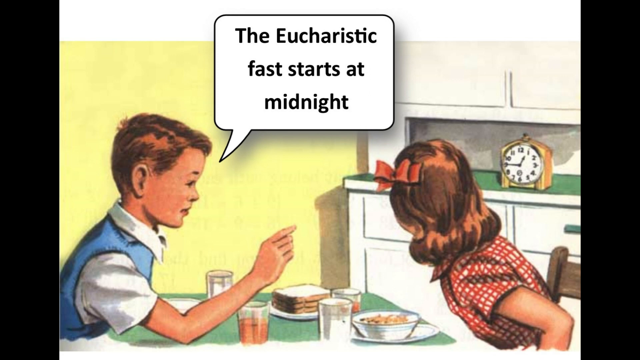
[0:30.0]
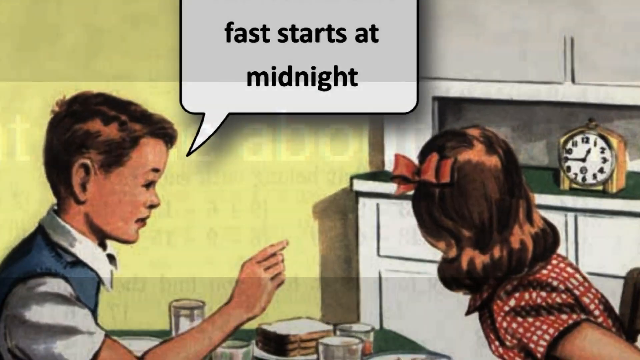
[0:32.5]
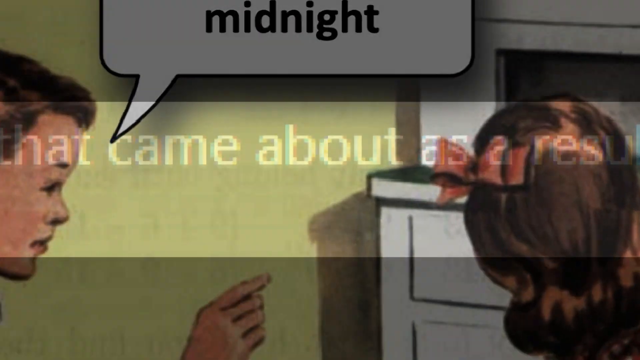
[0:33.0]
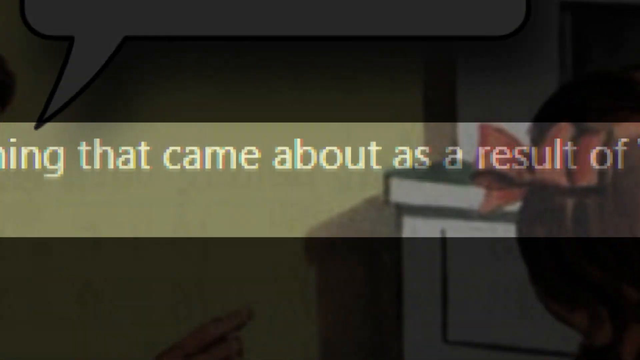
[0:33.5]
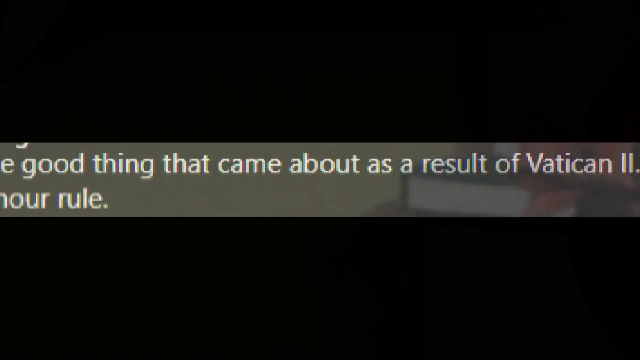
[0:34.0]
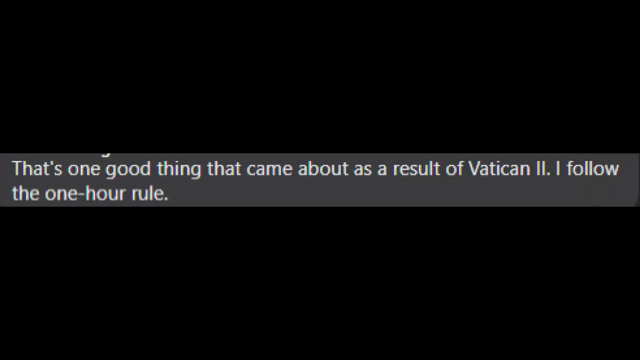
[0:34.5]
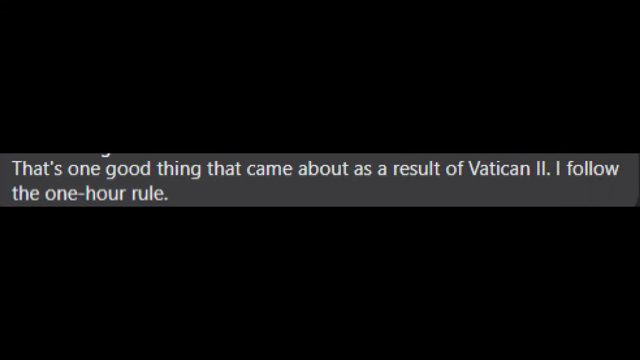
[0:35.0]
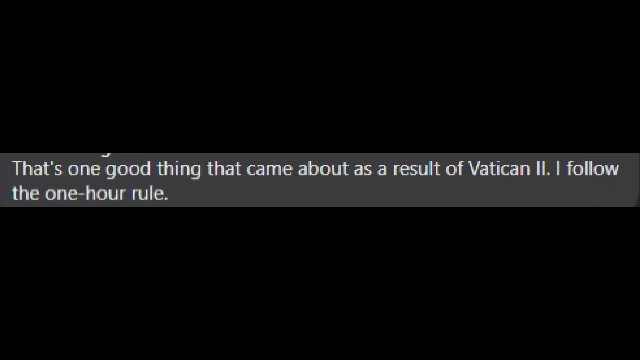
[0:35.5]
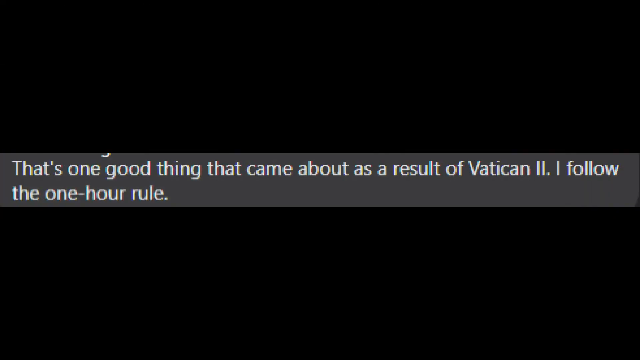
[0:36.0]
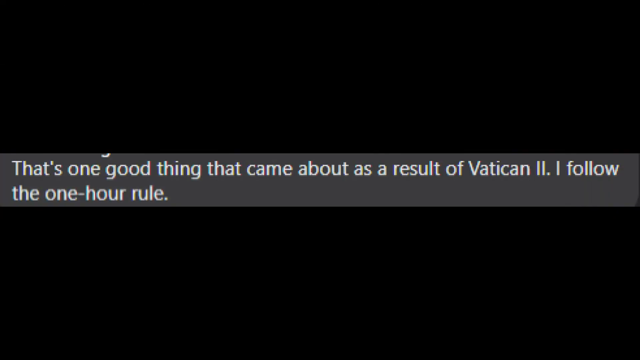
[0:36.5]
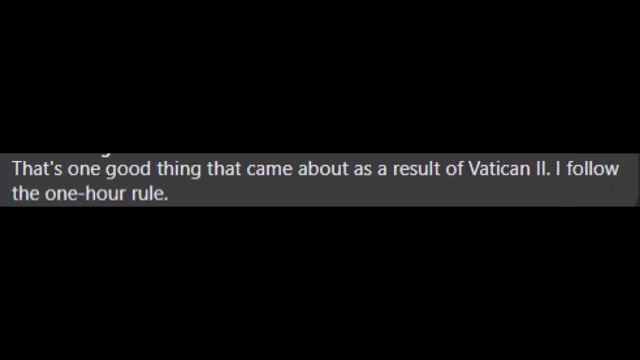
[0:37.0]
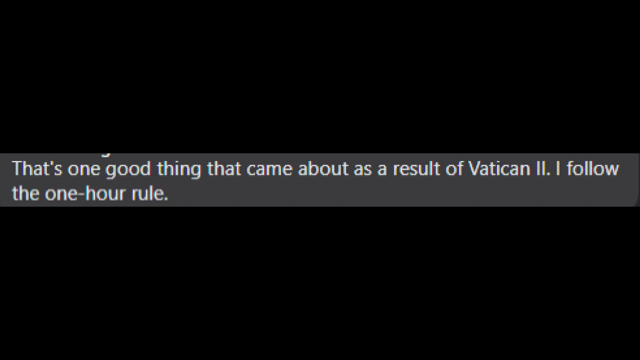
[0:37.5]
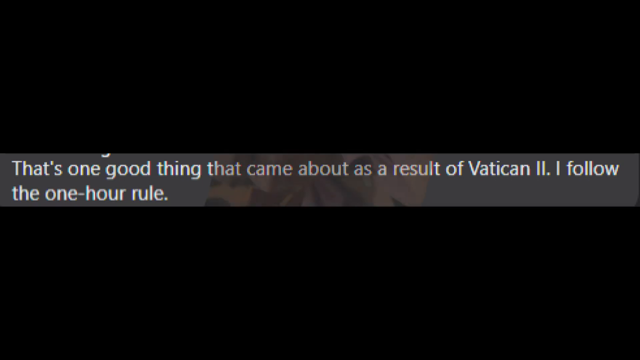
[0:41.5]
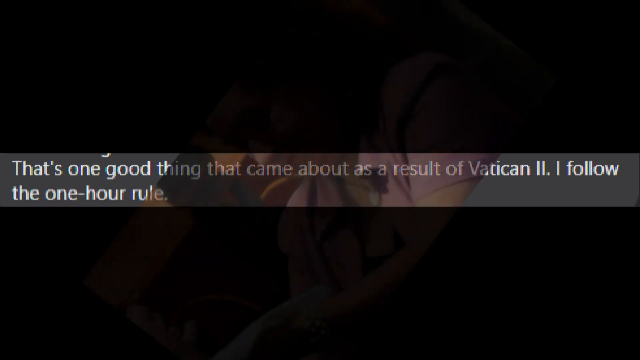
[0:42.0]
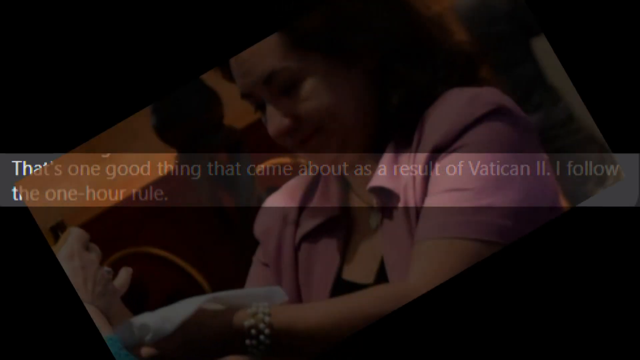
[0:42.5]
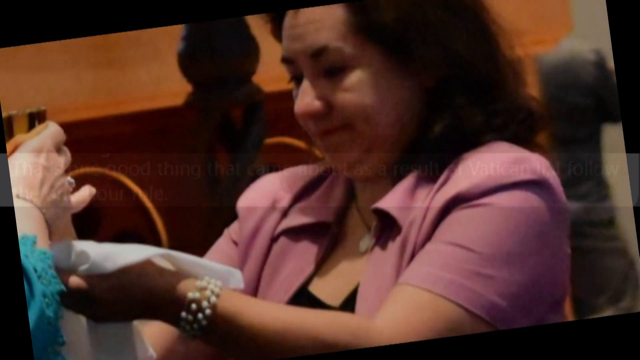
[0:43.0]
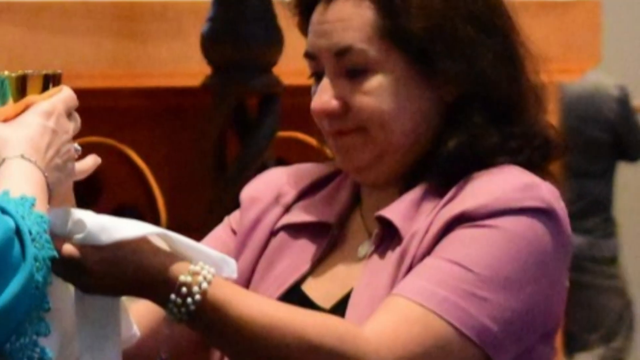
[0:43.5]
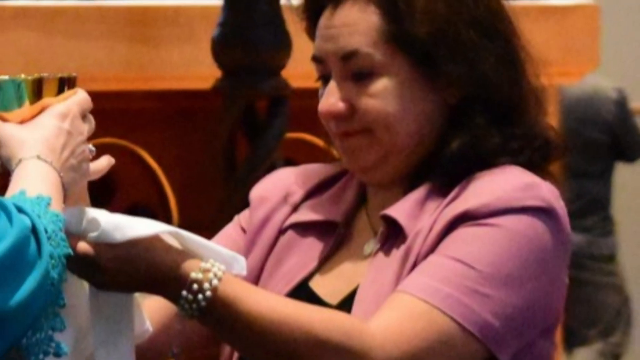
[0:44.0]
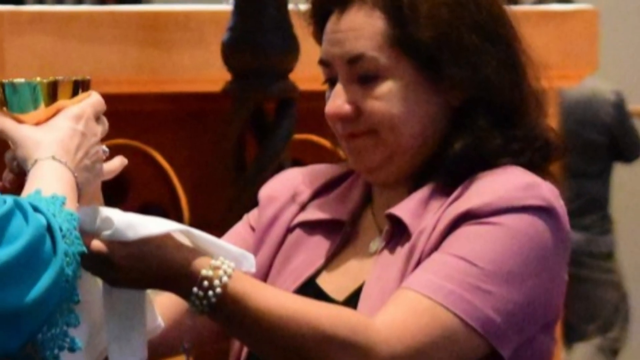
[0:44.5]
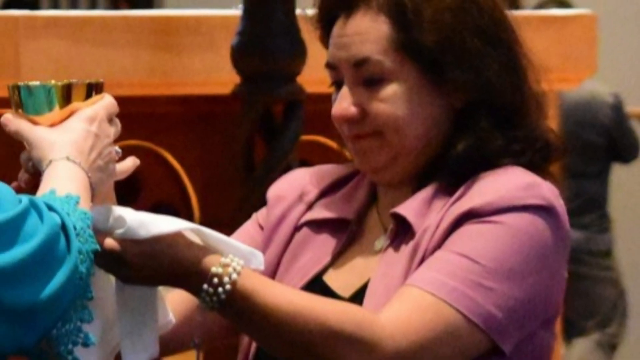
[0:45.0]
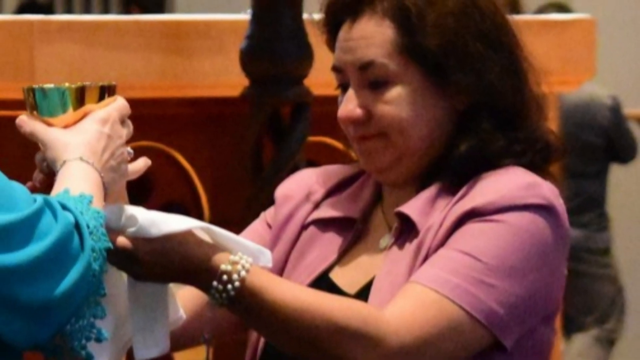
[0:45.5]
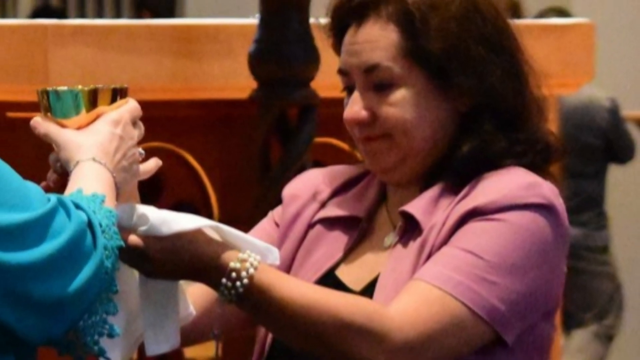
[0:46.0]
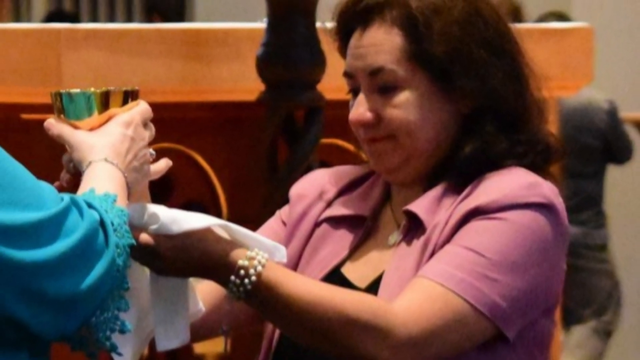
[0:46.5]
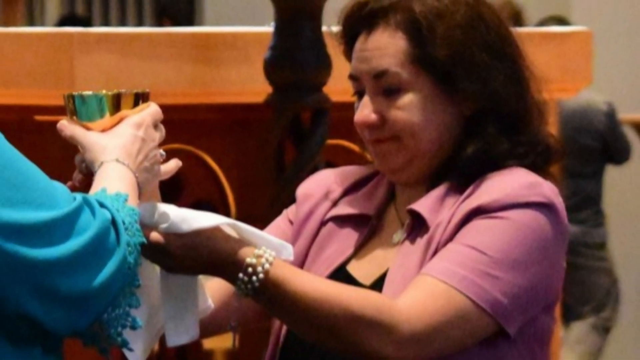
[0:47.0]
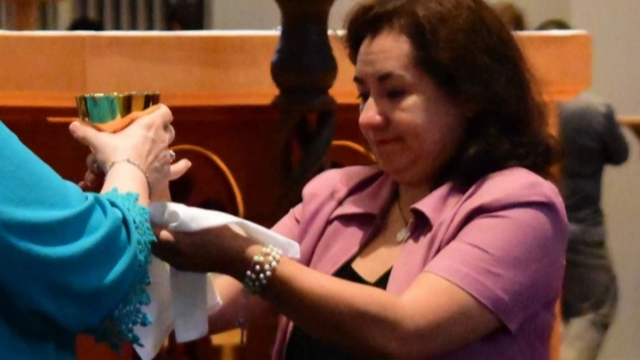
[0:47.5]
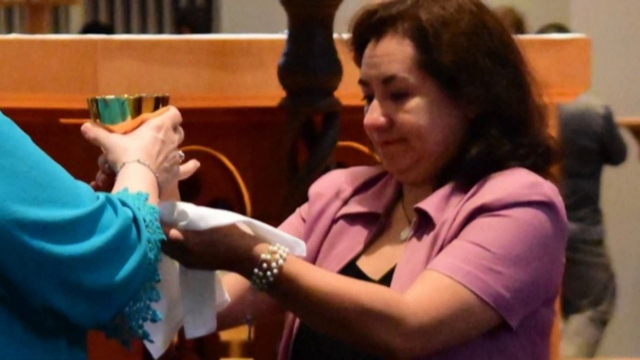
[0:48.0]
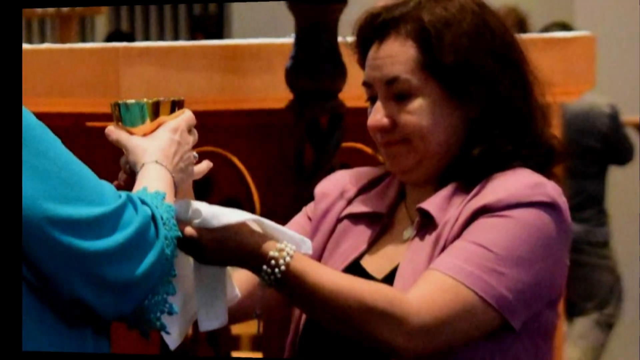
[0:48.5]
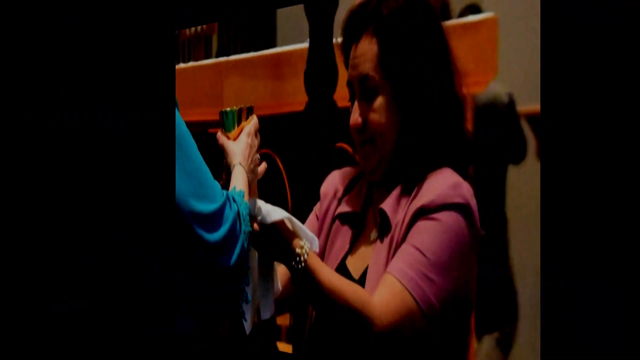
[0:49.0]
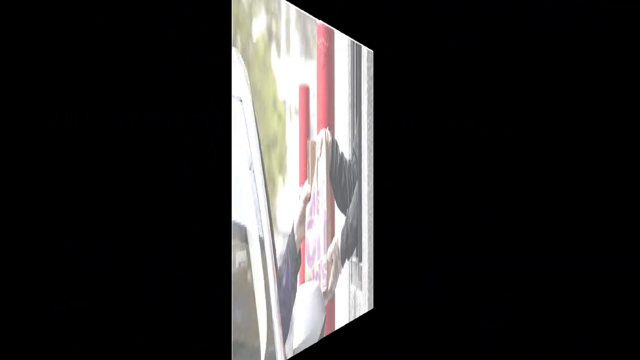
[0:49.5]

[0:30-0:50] A cartoonish image shows a boy and a girl at a kitchen table eating breakfast of cereal and toast, with a clock in the background. The boy's caption says "enriches fast starts at midnight". The boy sits at the table wearing a white short-sleeved shirt with a collar and a blue vest, pointing at the little girl or at something. The girl has a red bowtie in her hair and wears a red and white striped shirt. Text then comes up on the screen: "this one good thing that can come about as a result of the Vatican II. I follow the one hour rule." It stays there for a while, and then the video shows an older lady wearing a velvet top, something like an overcoat or jacket, and a black shirt. She holds a gold cup, and another lady holds the gold cup as well. The lady in a sort of maroon top has a white cloth in her hand under the gold cup, while the other lady holds the cup with both hands; they hold it together.